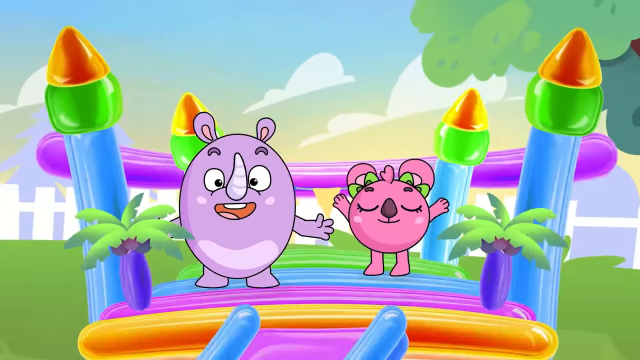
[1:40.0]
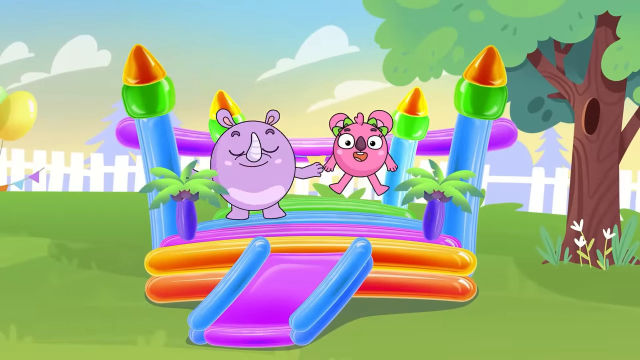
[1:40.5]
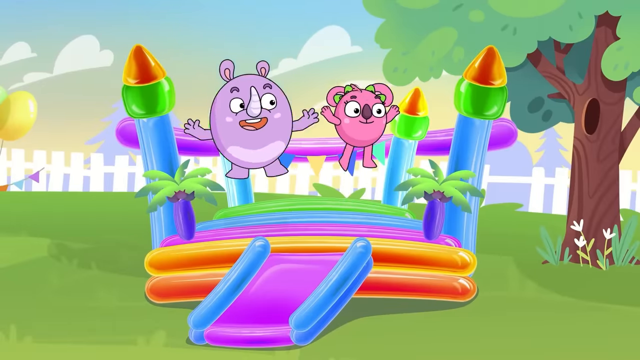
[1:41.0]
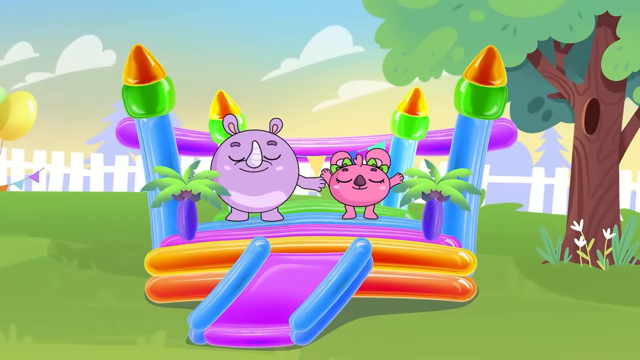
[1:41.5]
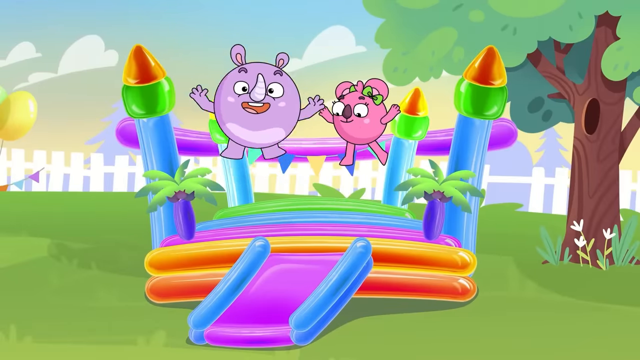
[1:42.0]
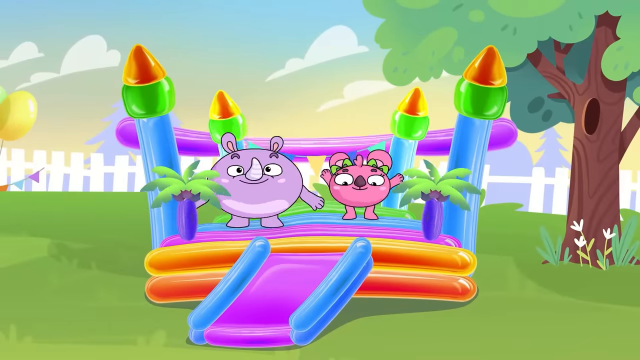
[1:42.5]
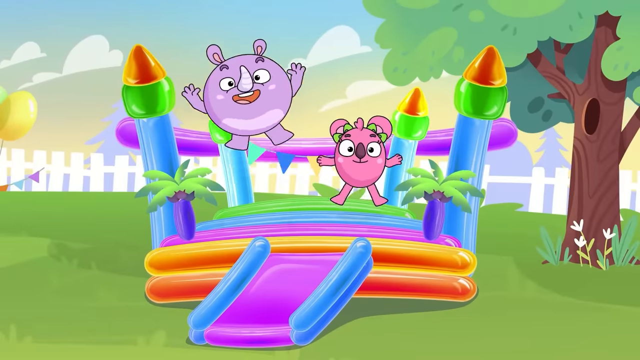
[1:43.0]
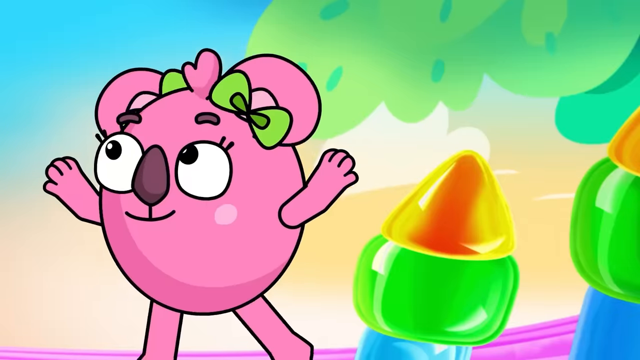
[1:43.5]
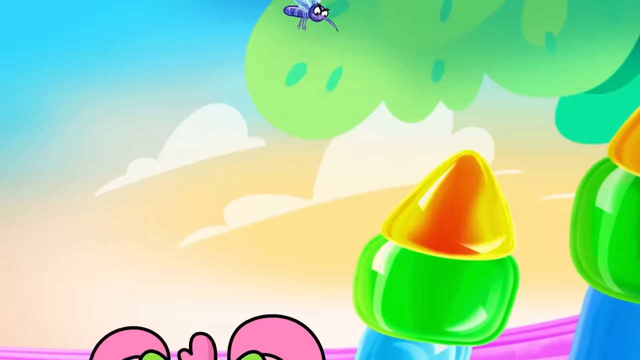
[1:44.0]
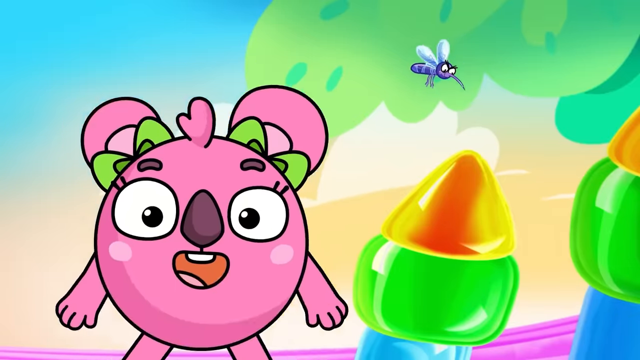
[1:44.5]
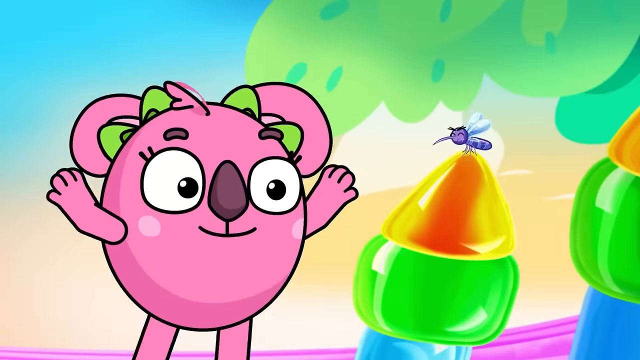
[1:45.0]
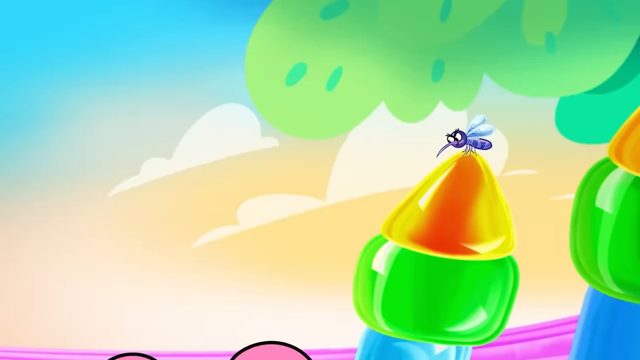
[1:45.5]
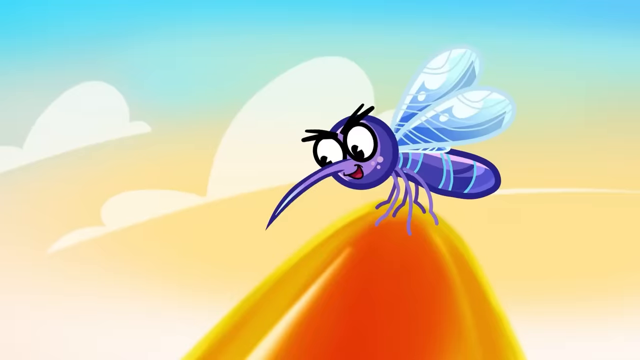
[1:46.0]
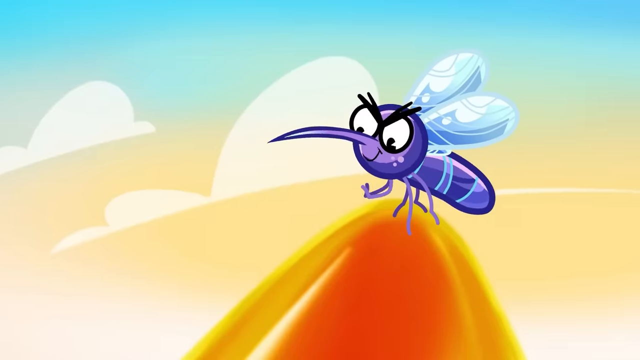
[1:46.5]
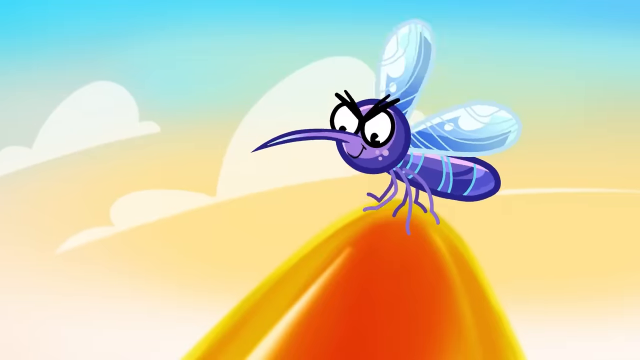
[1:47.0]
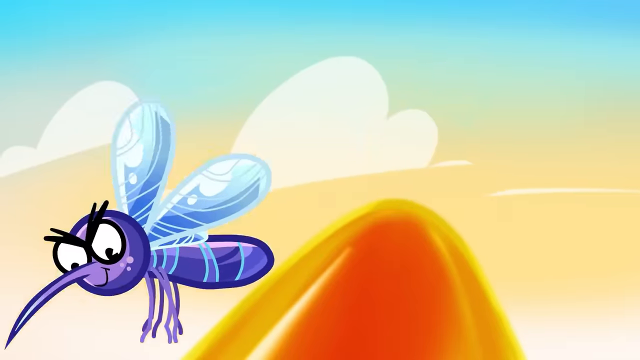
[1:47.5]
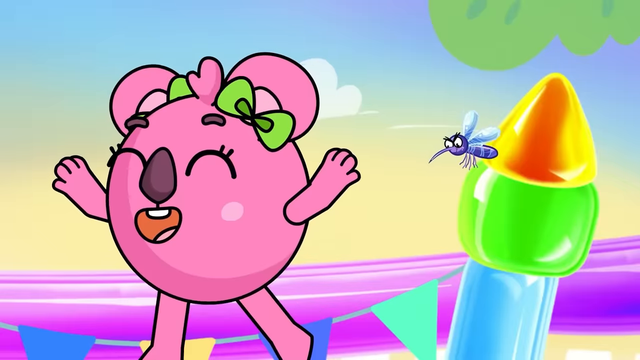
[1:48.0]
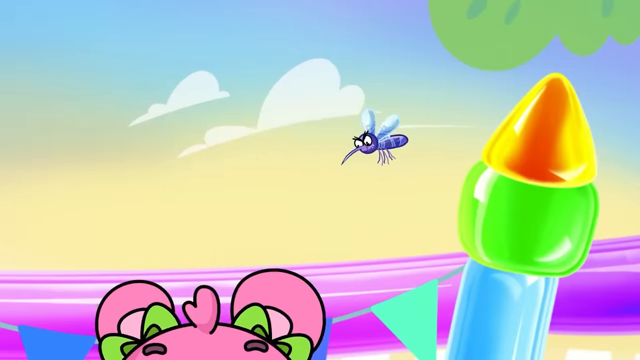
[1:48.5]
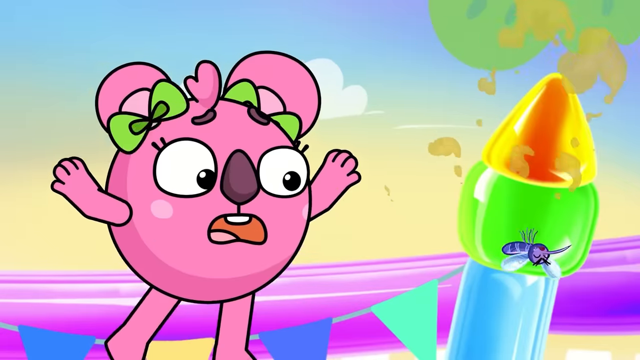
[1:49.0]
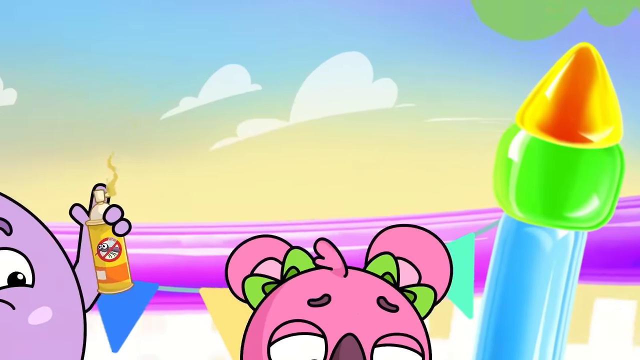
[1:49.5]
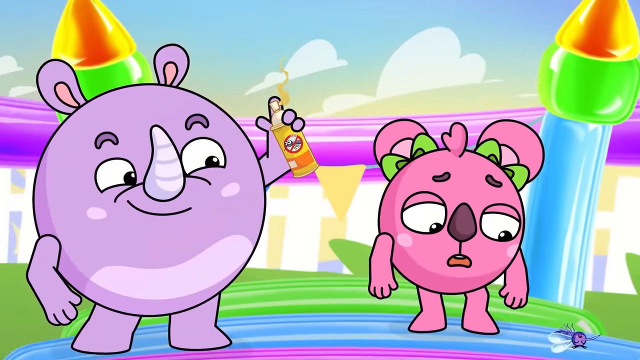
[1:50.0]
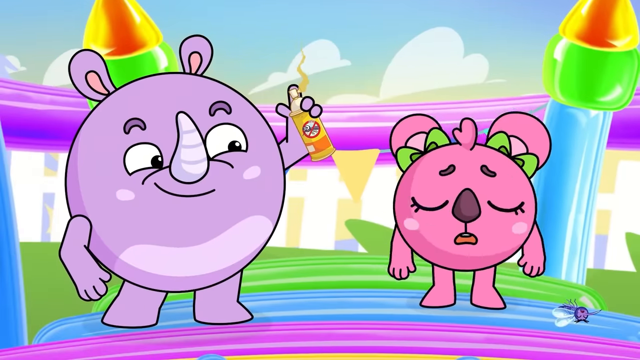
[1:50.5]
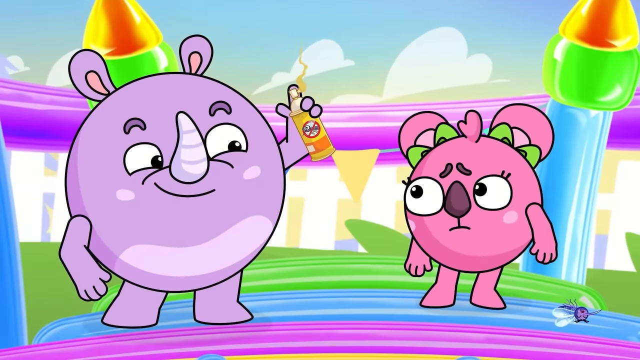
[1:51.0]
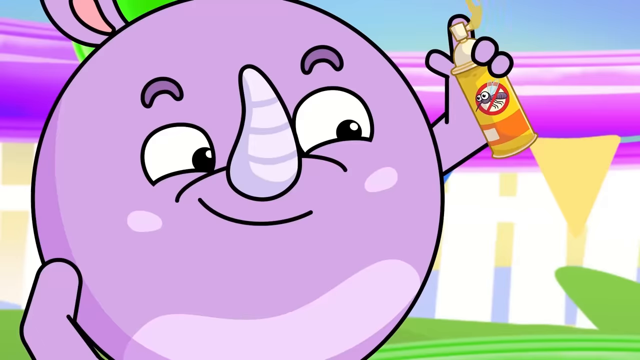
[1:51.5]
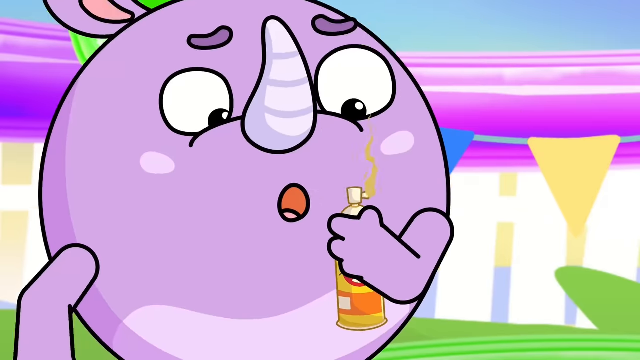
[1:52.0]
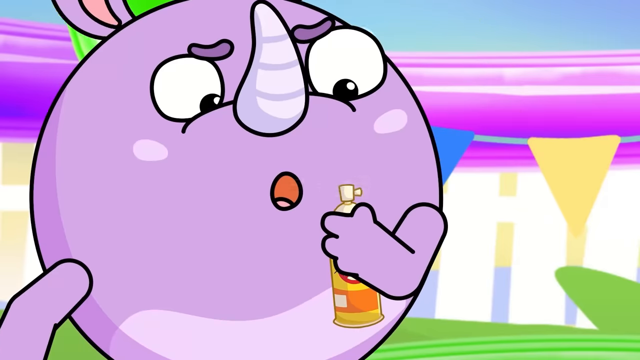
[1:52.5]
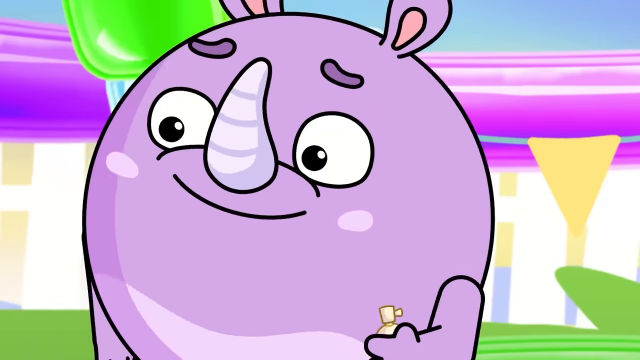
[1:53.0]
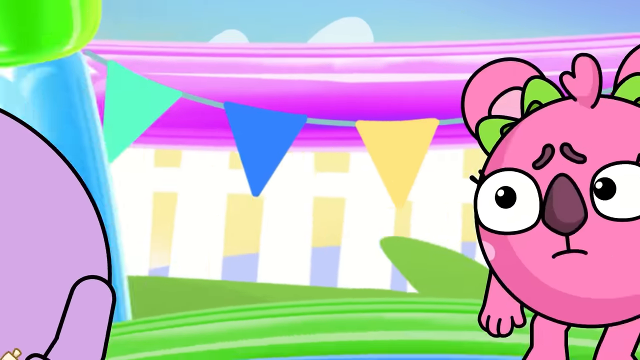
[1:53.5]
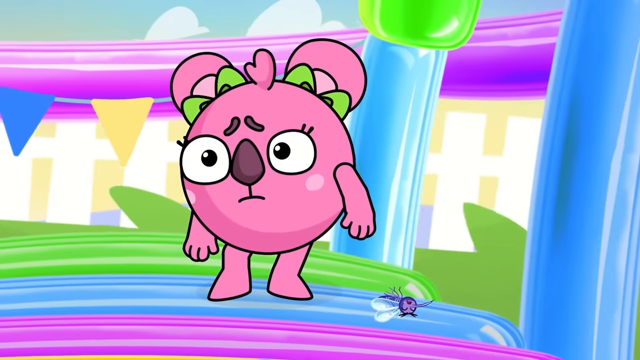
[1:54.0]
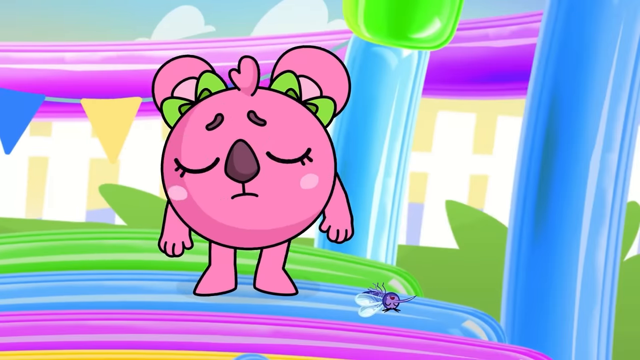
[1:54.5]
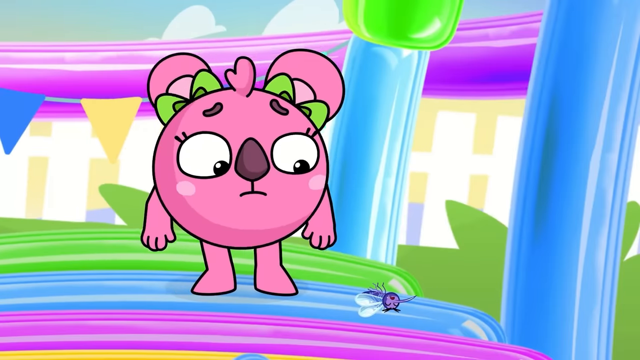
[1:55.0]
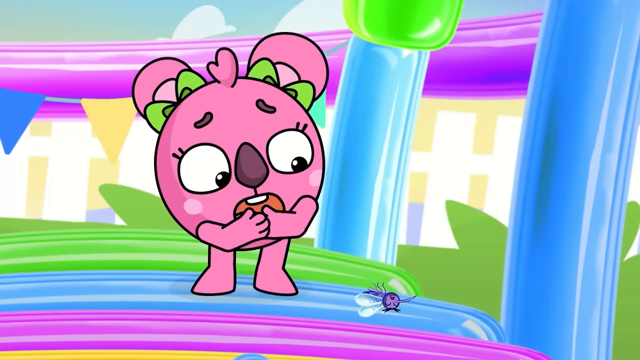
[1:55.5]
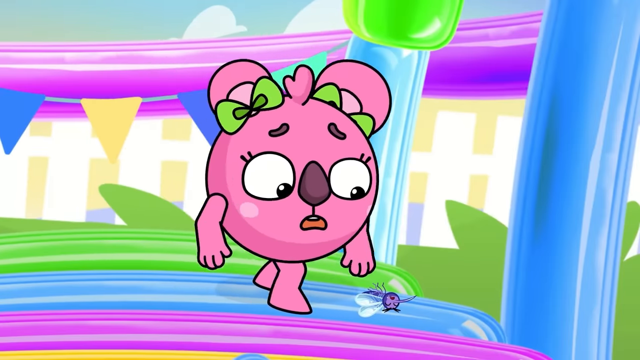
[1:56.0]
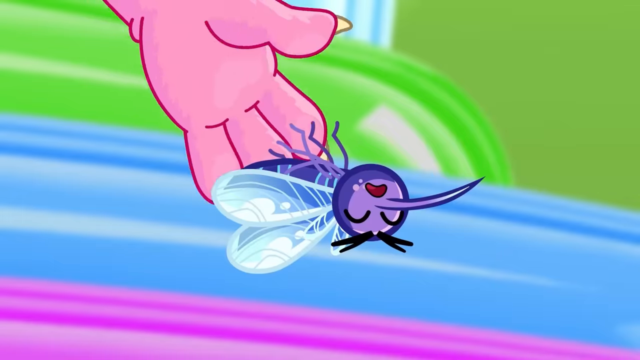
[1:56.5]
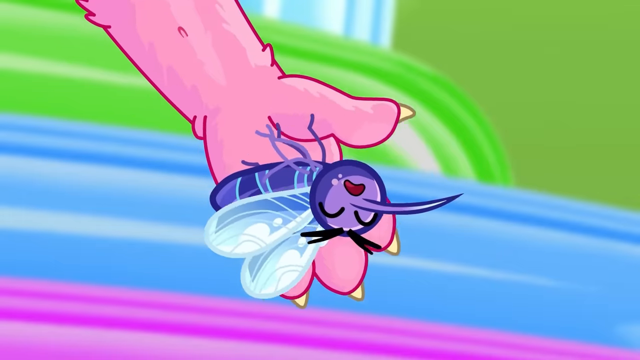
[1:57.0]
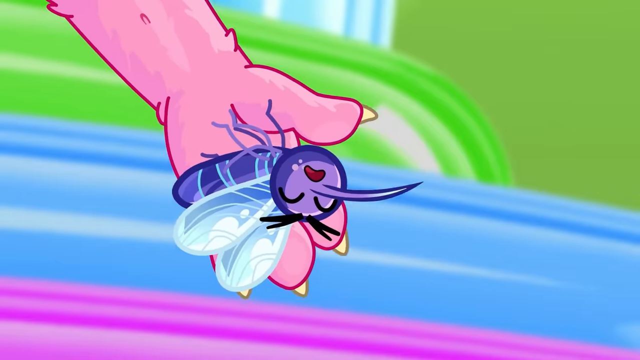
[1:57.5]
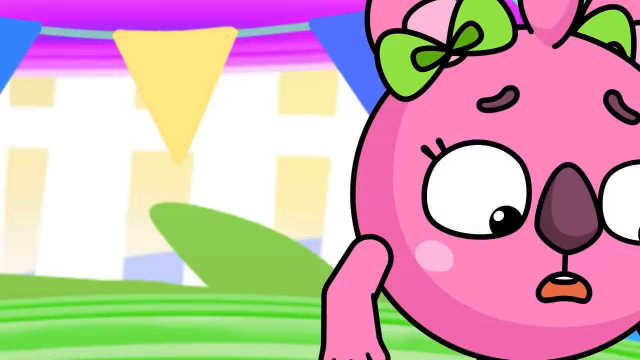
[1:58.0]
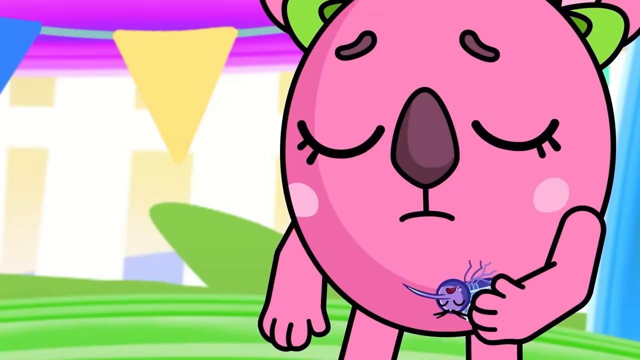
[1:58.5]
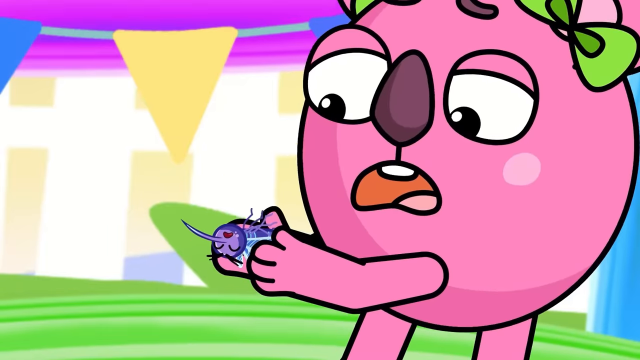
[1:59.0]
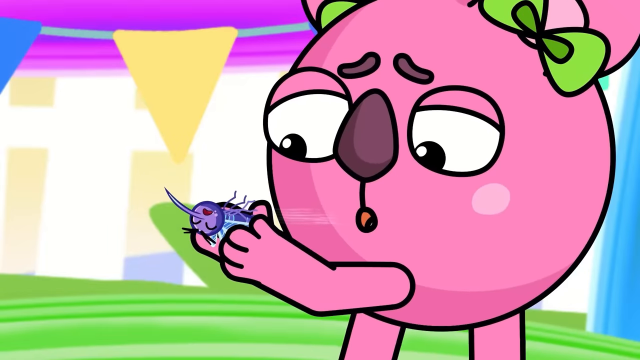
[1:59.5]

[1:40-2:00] The creatures bounce on a bouncy castle that is kind of orange with some blue. There is a purple slide, a green field, a fence, a blue sky with white clouds, and a tree with a hole in it and a green top. There are flowers and plants, and text reads "orange booboos"; the castle has purple, blue and green colors and different kinds of shapes, including an orange cone and green circles. One of the creatures has a large horn and purple ears and holds his hands in the air. The bouncing creatures make imprints. The mosquito comes along, sits on the cone and rubs his little hands together, but the rhino character sprays him with anti-mosquito spray. The little girl seems sad; she puts her hands on his face, scoops up the mosquito, blows on it and taps it with one finger.